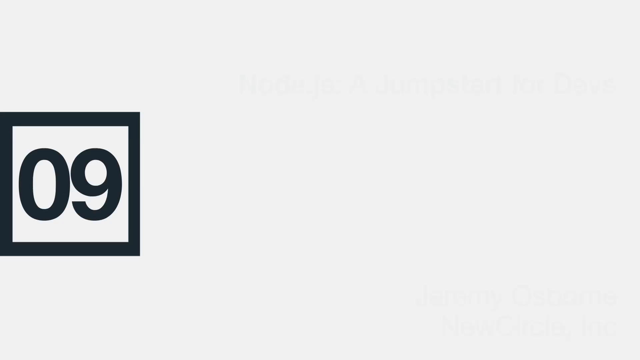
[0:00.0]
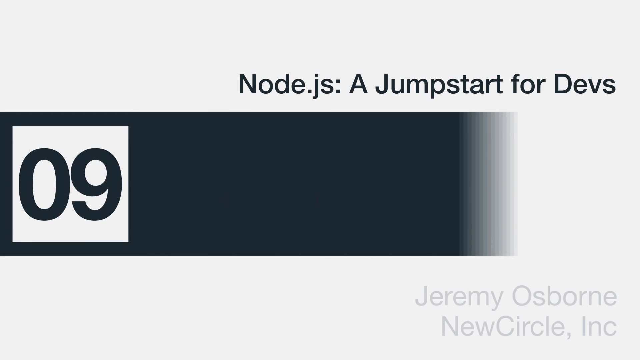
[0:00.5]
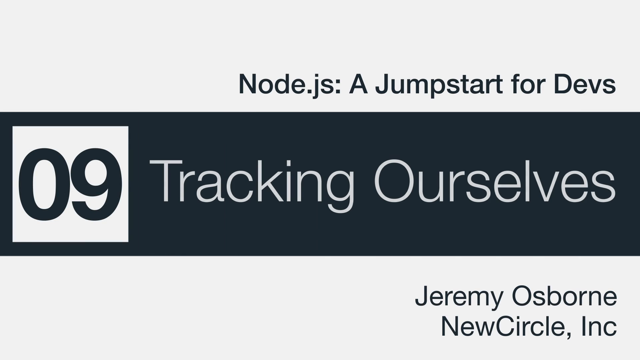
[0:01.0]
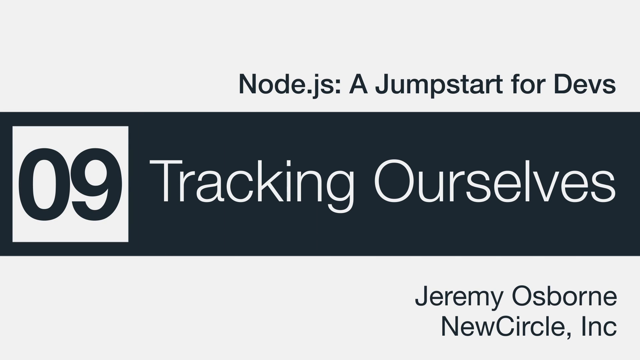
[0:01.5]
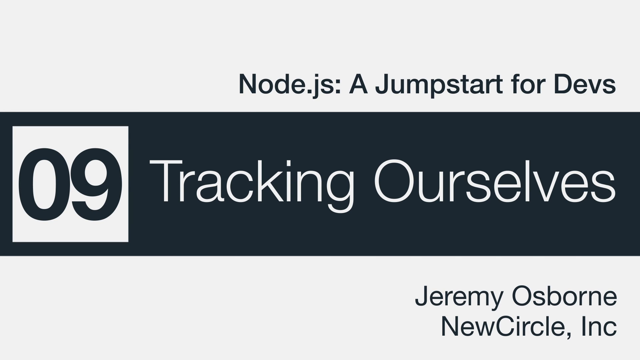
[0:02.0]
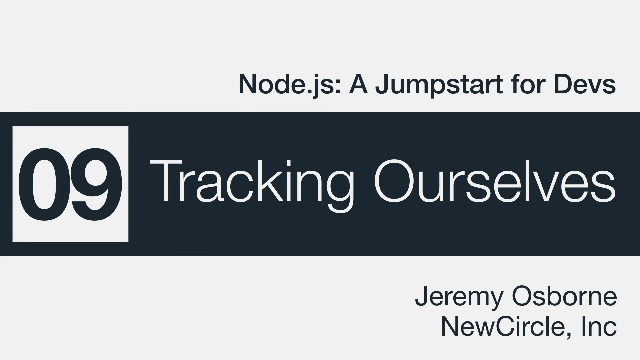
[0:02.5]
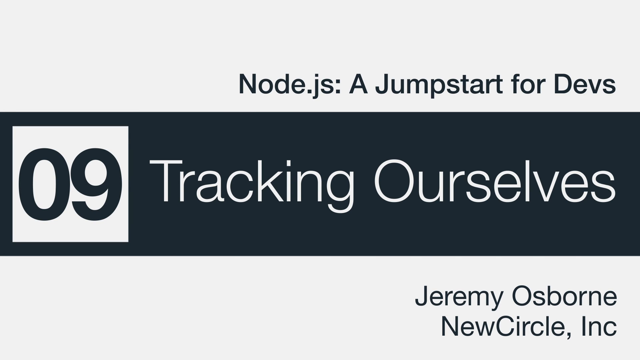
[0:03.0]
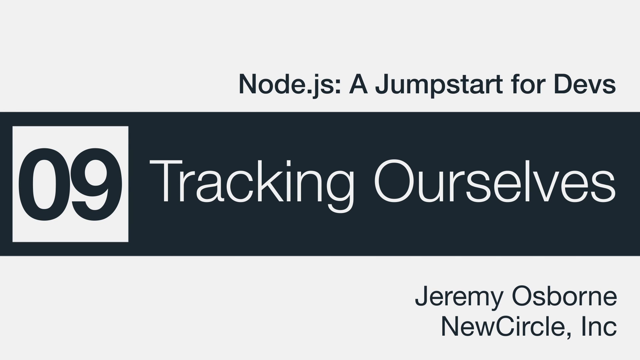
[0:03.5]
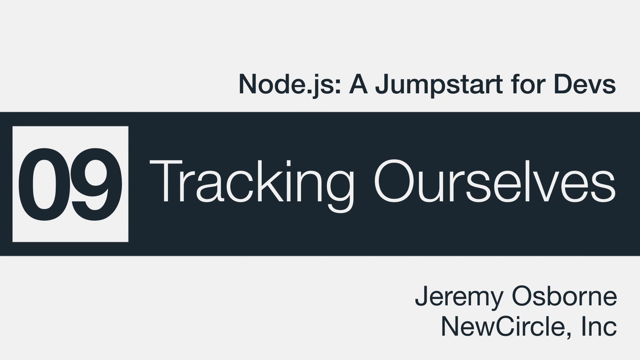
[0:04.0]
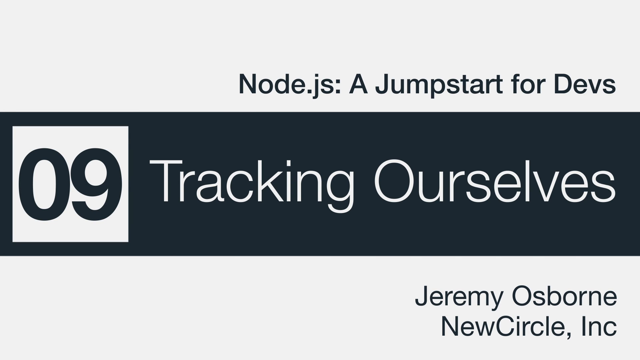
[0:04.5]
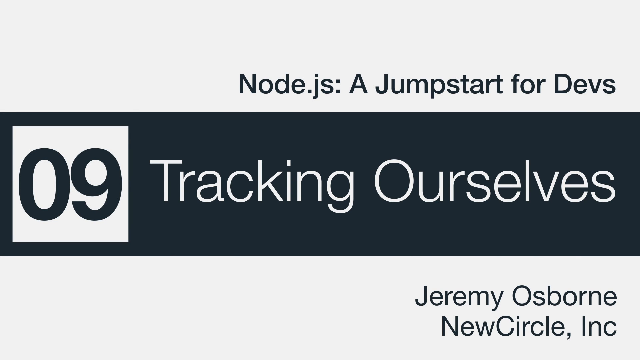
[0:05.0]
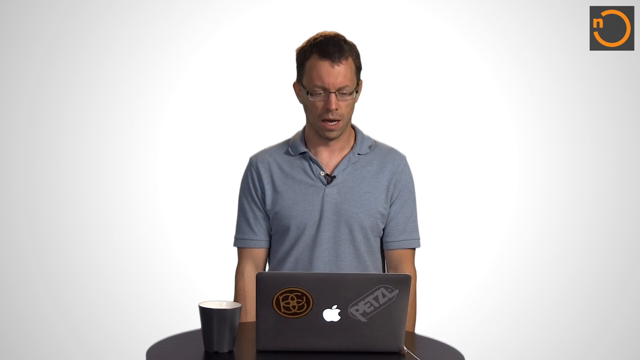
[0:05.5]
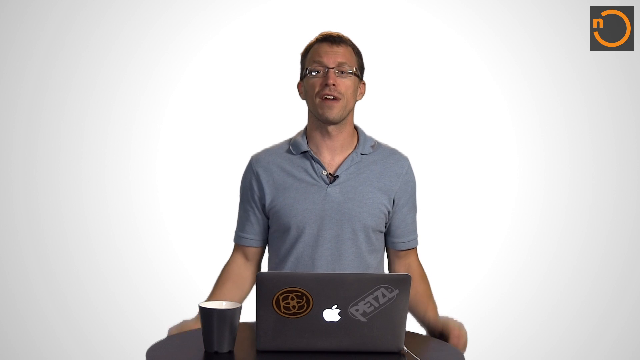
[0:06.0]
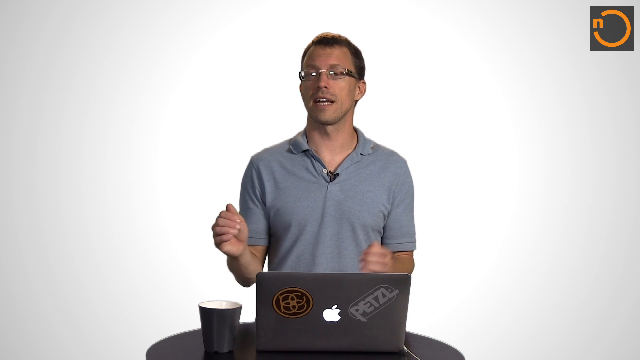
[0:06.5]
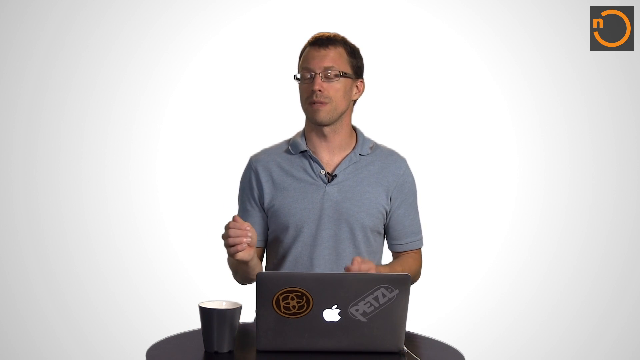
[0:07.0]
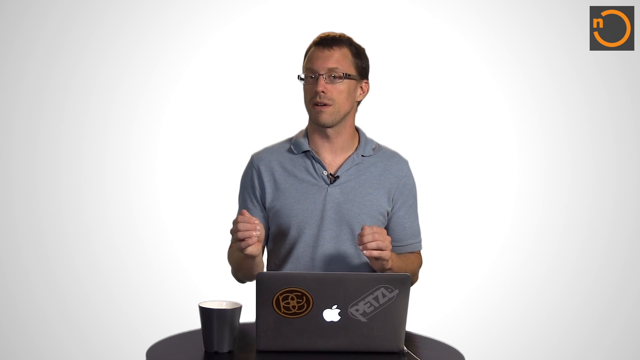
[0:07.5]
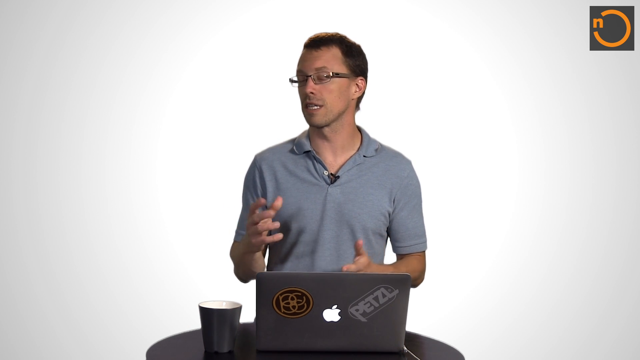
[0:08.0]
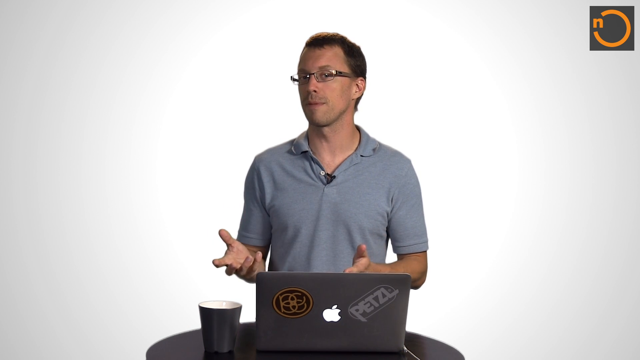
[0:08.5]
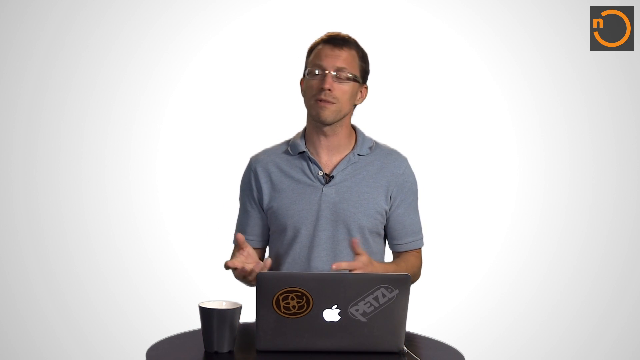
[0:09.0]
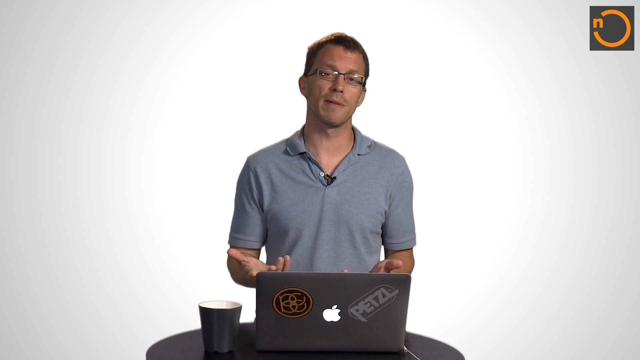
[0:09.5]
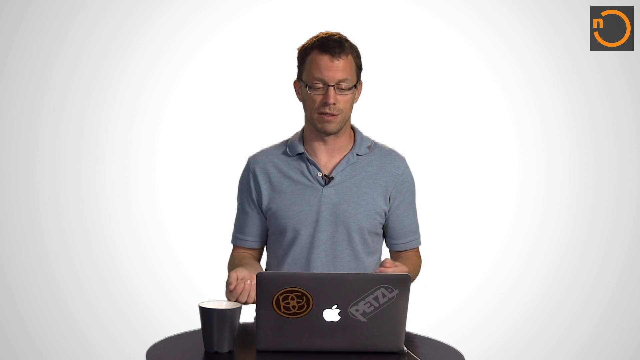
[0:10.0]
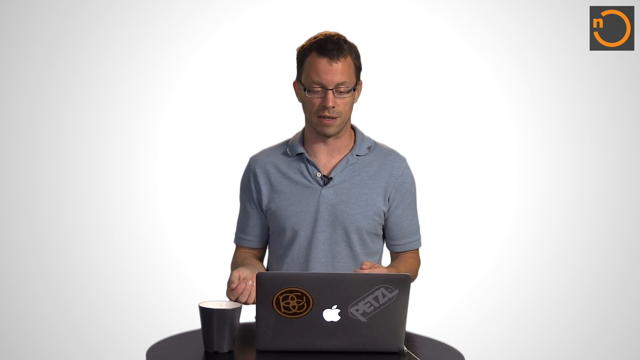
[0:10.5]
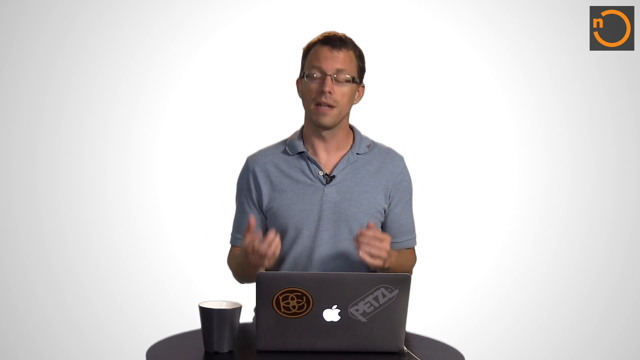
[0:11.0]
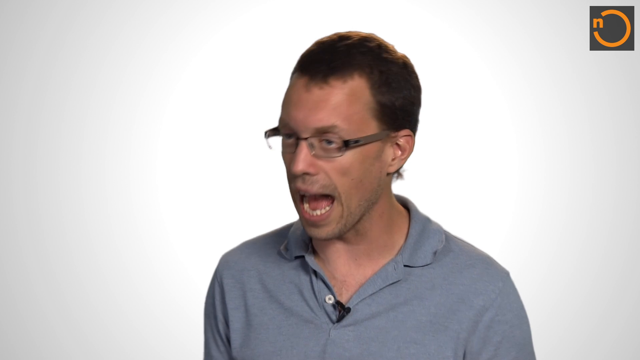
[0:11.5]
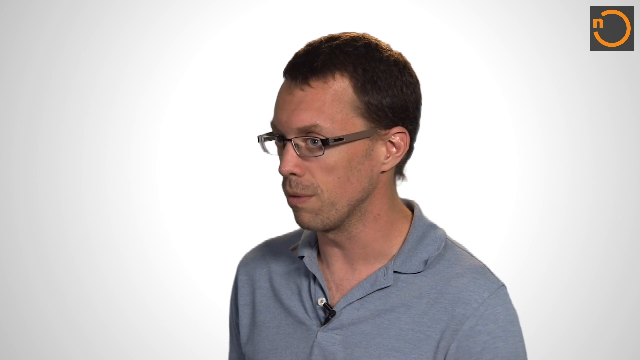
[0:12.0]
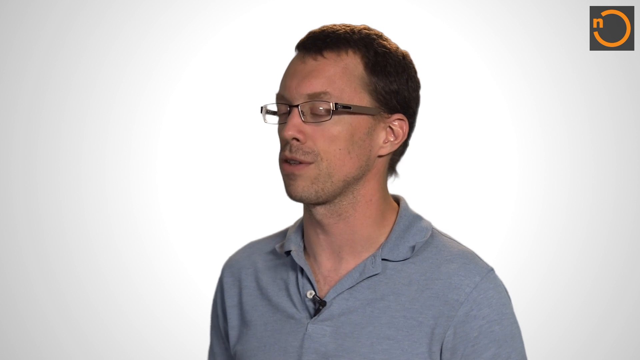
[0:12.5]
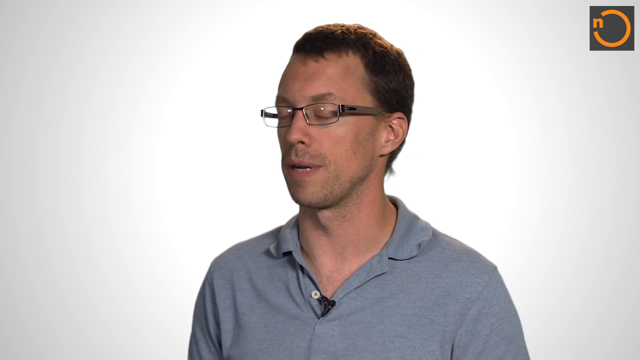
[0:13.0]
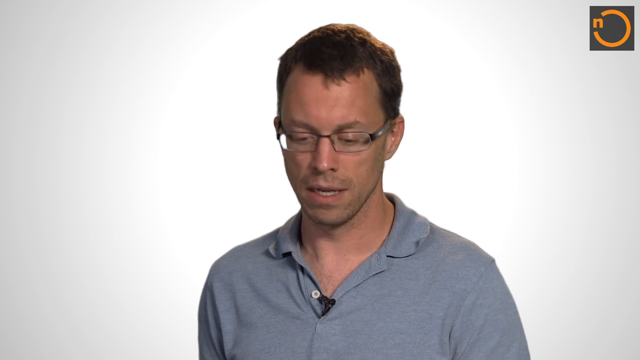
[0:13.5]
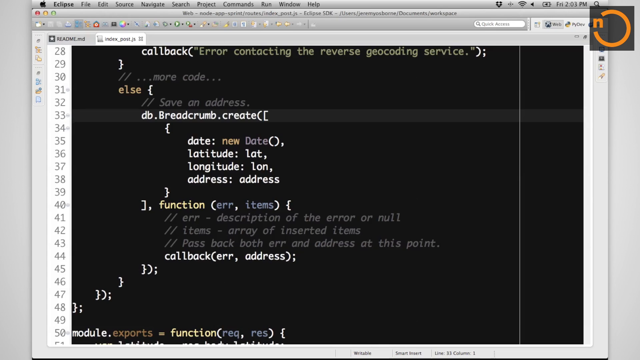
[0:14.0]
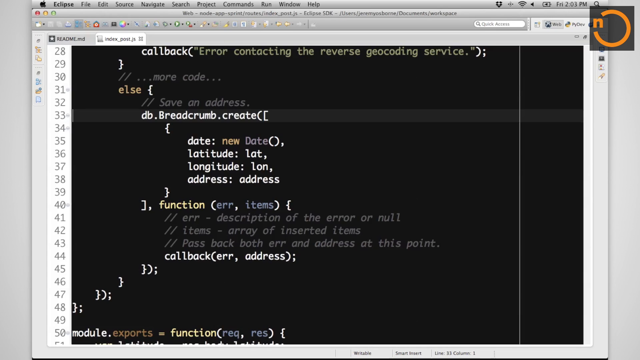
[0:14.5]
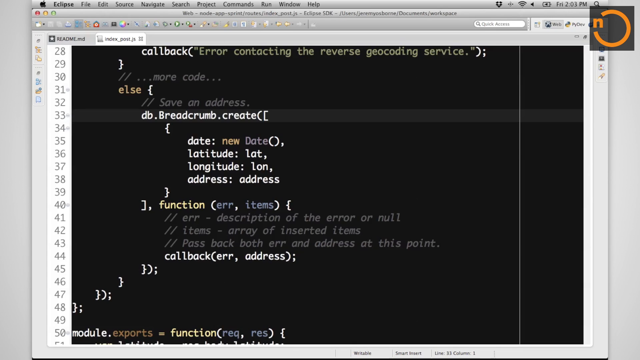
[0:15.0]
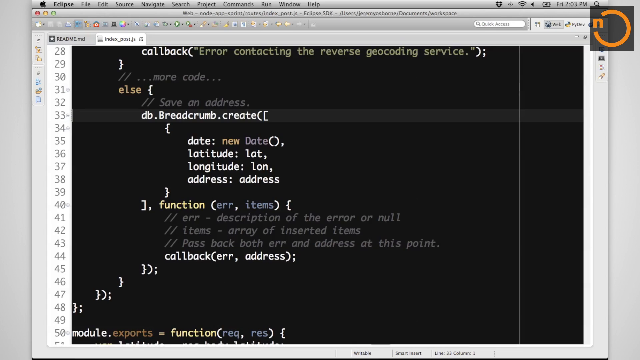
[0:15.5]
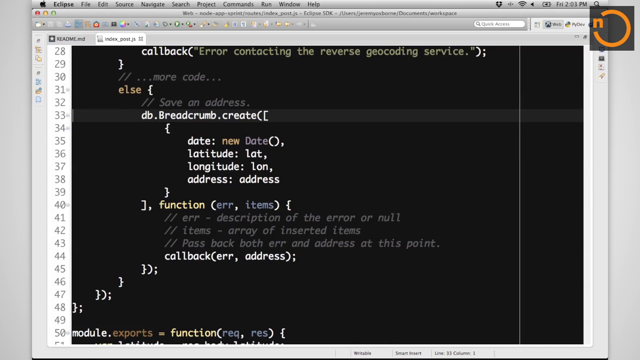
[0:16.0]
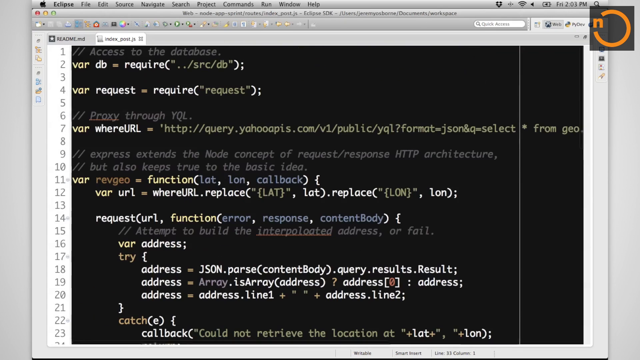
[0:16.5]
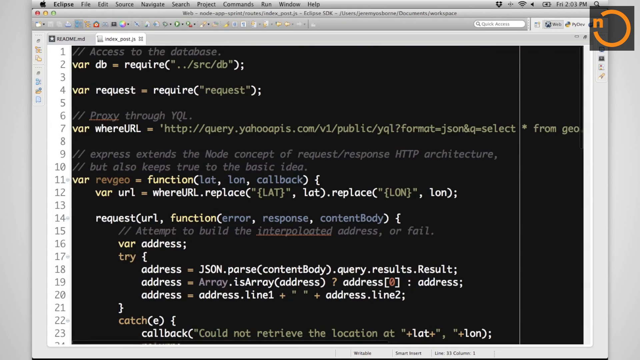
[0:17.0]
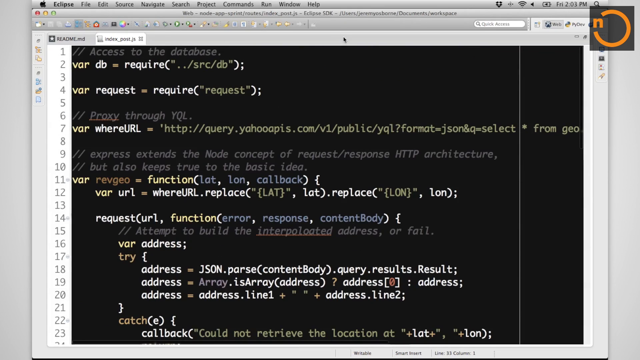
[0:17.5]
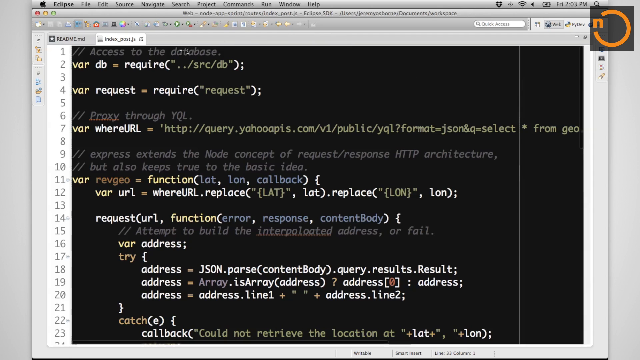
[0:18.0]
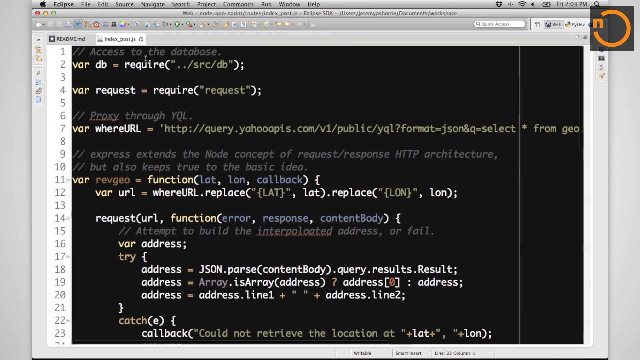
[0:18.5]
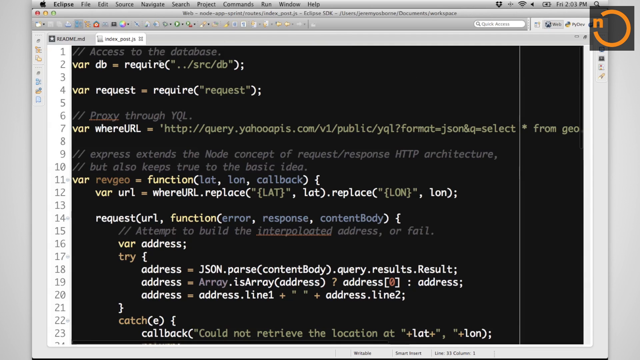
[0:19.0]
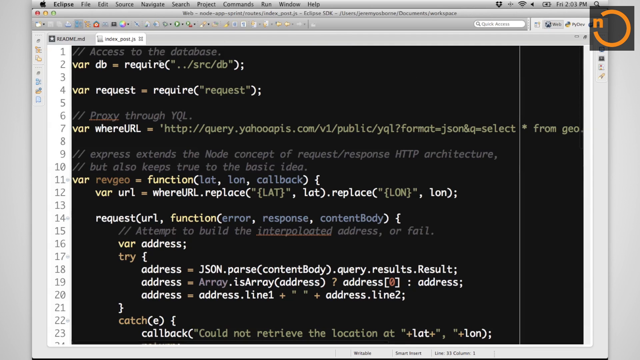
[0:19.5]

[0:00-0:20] The video starts with an ad for developers, showing what appears to be a developer with the code of an application on a computer. It looks like development code containing some function inscriptions, probably code for something that will be explained later. More code instructions are shown.